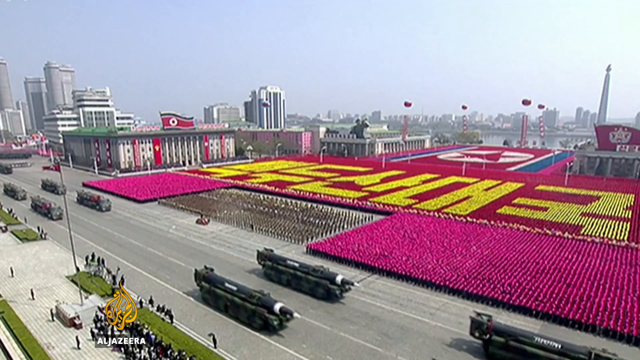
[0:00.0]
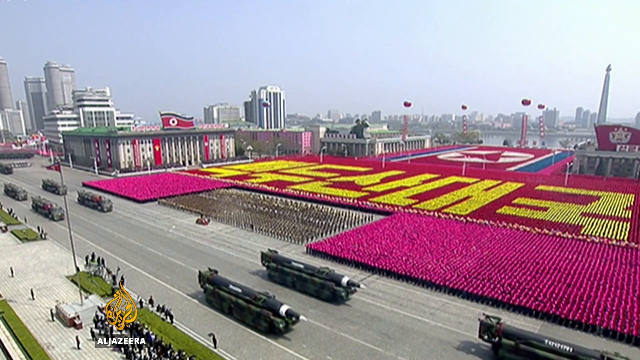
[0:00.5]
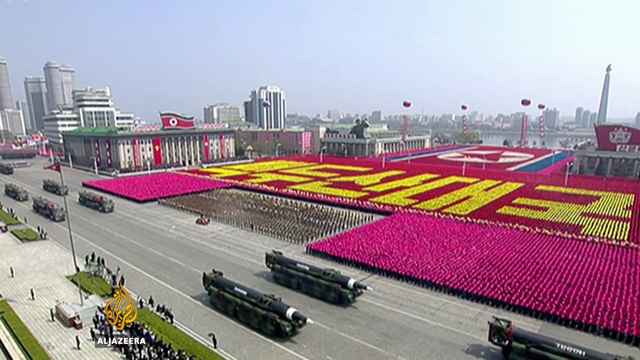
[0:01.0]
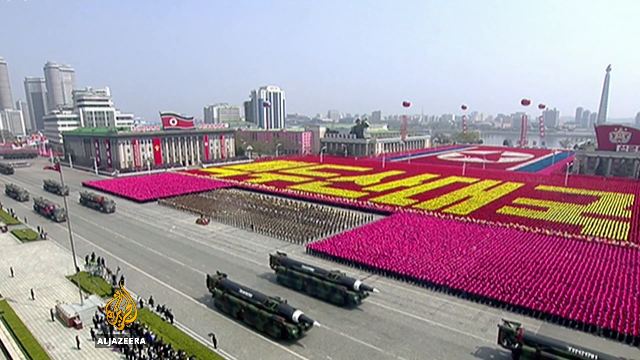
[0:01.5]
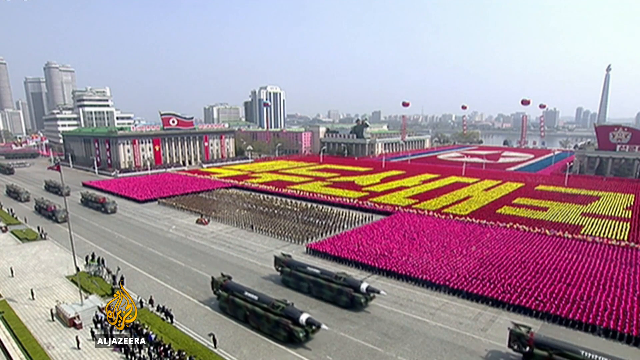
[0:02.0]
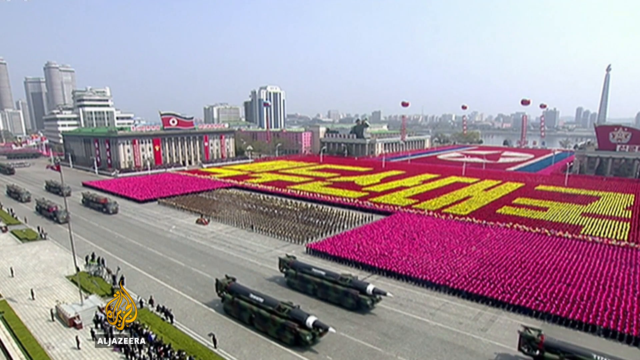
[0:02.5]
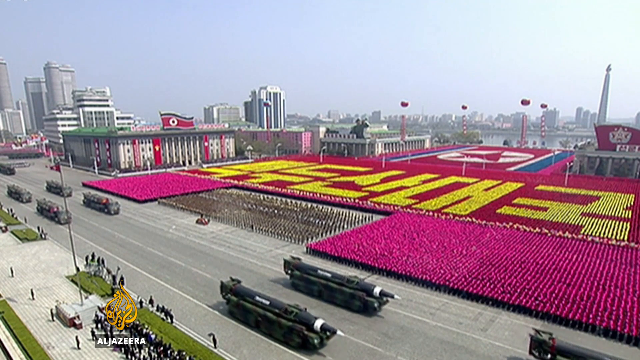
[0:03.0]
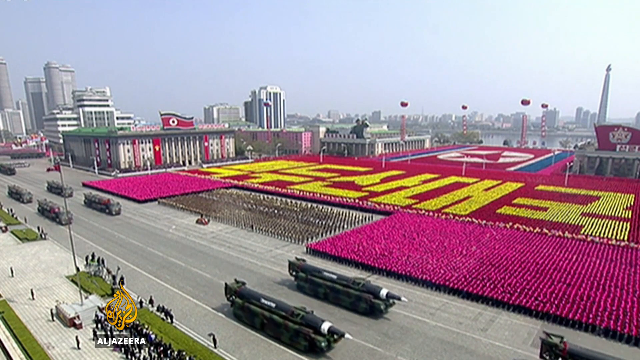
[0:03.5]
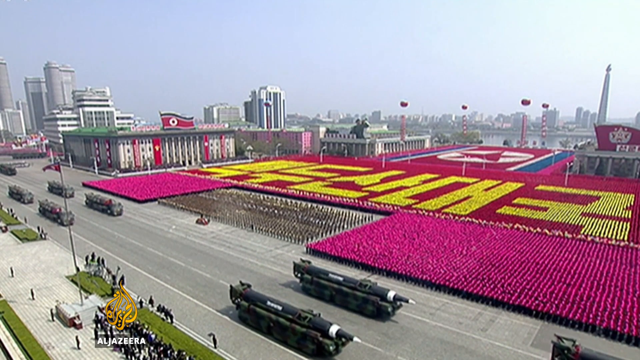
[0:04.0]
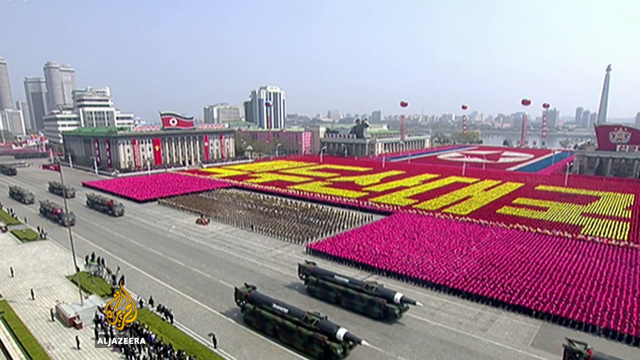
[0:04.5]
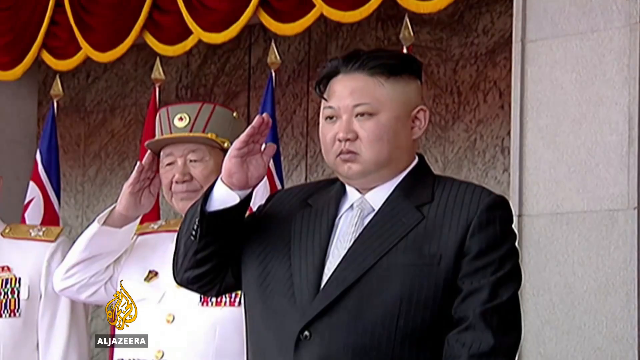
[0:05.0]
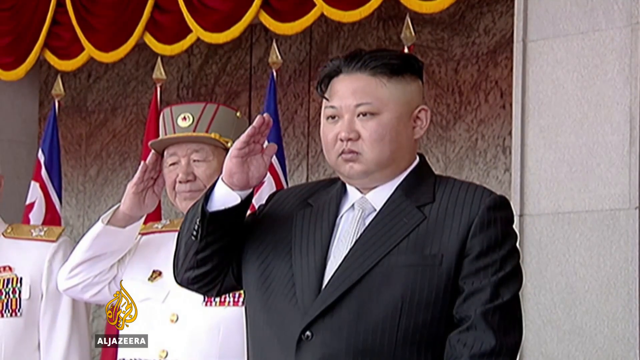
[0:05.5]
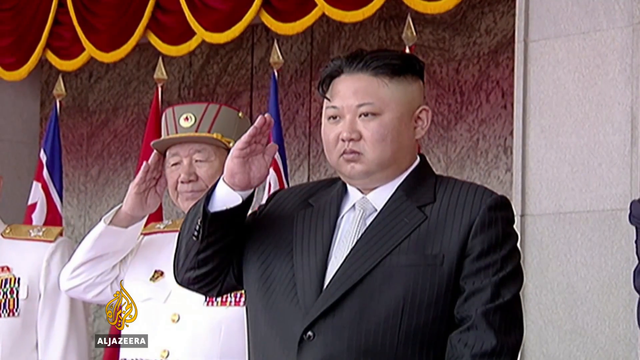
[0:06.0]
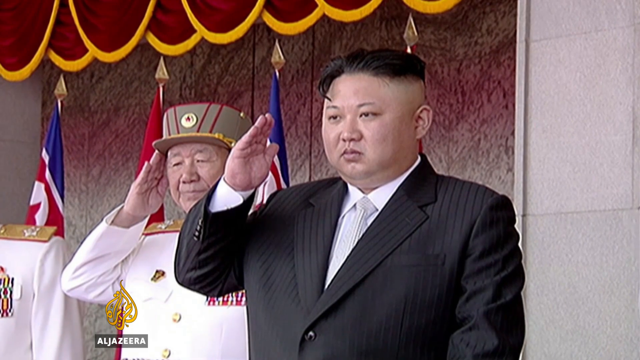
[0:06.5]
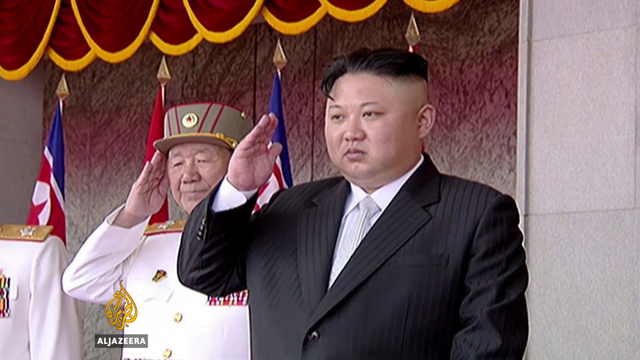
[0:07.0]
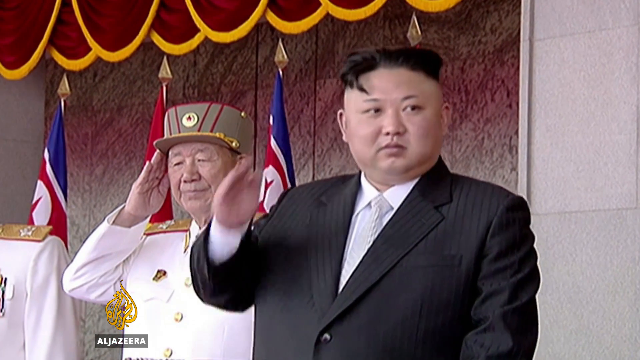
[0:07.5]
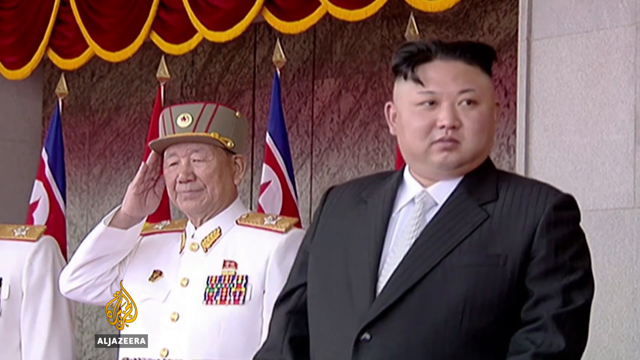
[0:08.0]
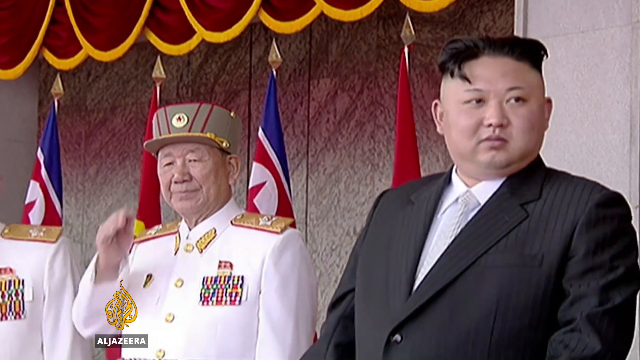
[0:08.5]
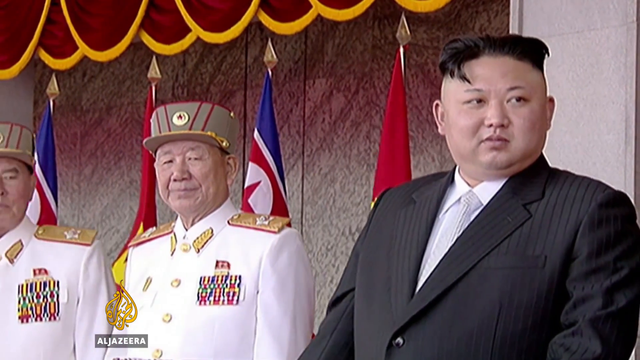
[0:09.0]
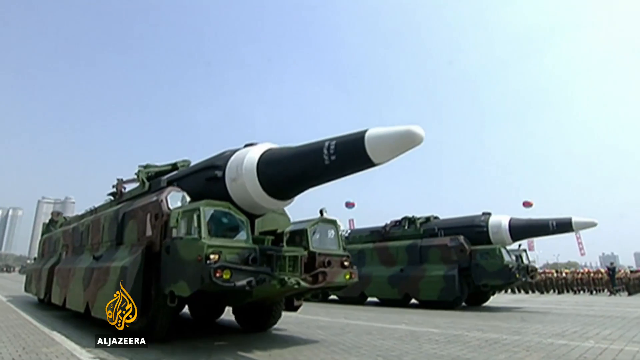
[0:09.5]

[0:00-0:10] A city with multiple buildings appears, followed by cars on the road that look like army cars, driving down the street. Two Chinese men give a salute with their right hands. One man has short hair shaved on the sides and wears a black suit, a silver tie and a white shirt; next to him is a man in a white army uniform. Flags are behind them. The cars are green and brown, and the top of each seems to be shaped like a rocket.